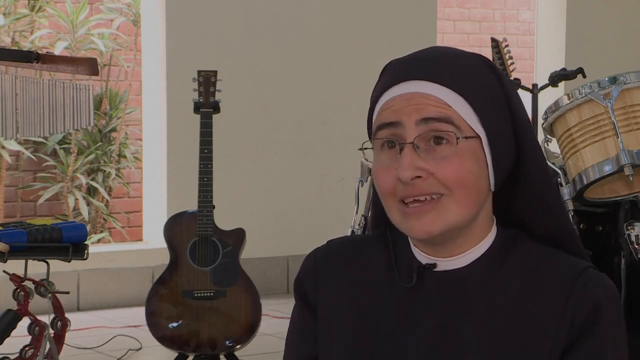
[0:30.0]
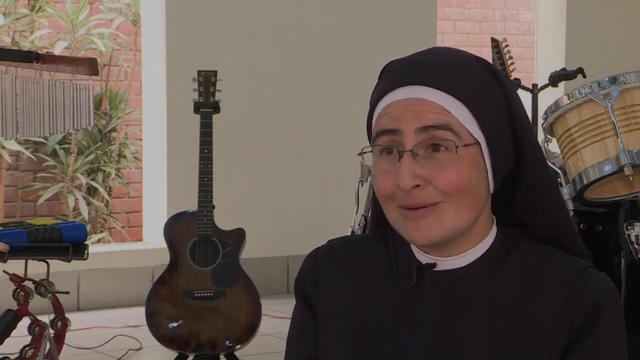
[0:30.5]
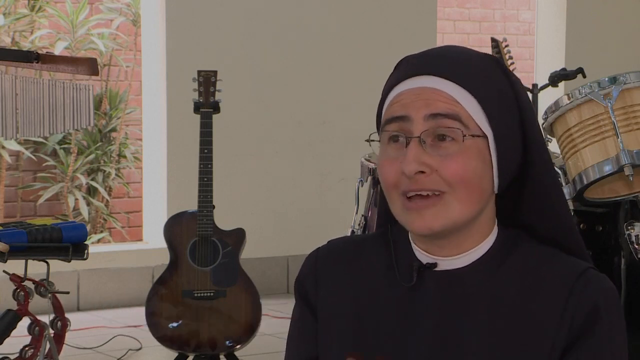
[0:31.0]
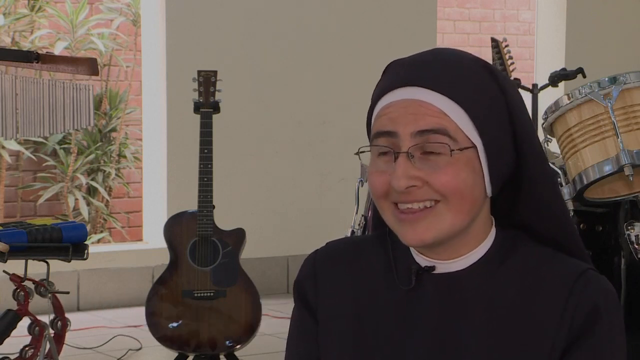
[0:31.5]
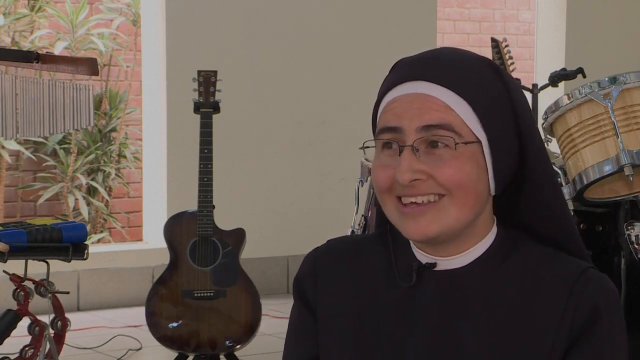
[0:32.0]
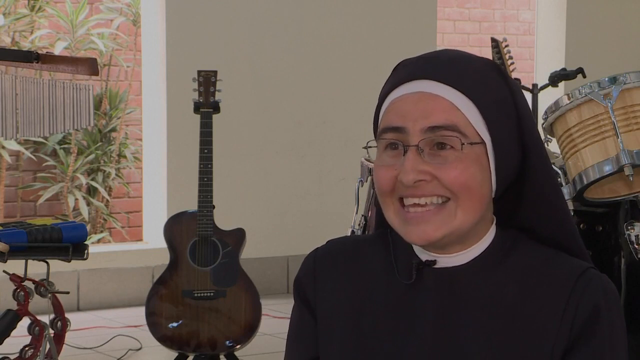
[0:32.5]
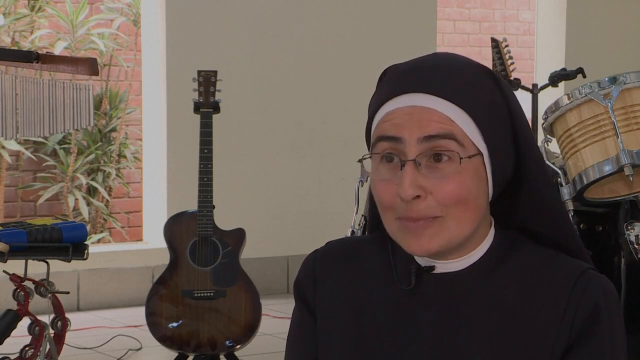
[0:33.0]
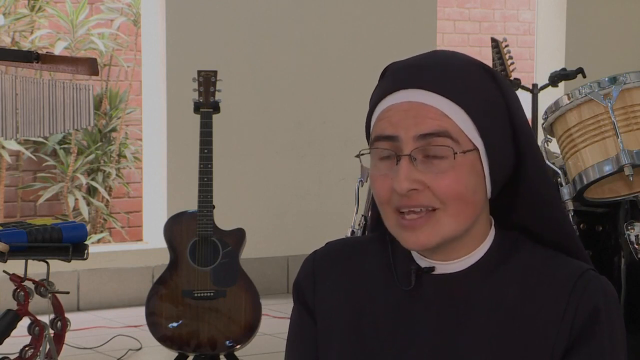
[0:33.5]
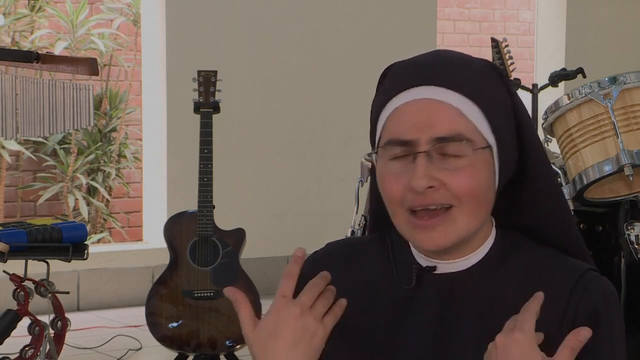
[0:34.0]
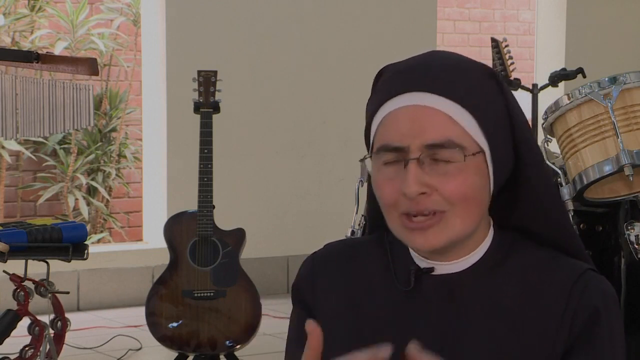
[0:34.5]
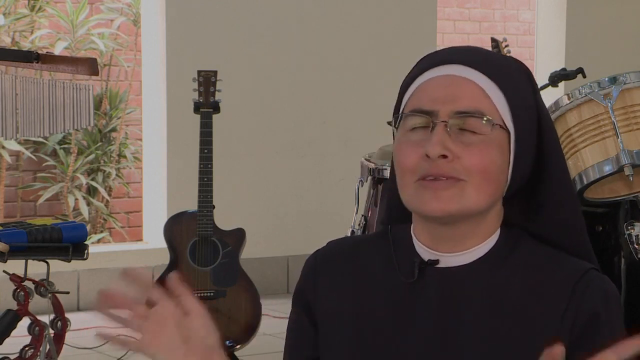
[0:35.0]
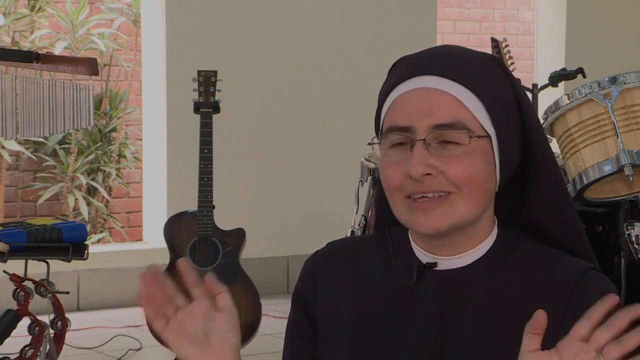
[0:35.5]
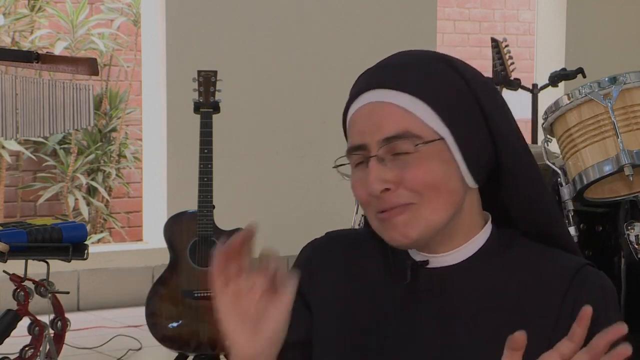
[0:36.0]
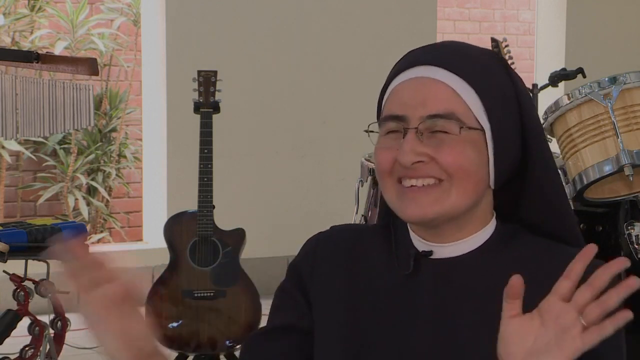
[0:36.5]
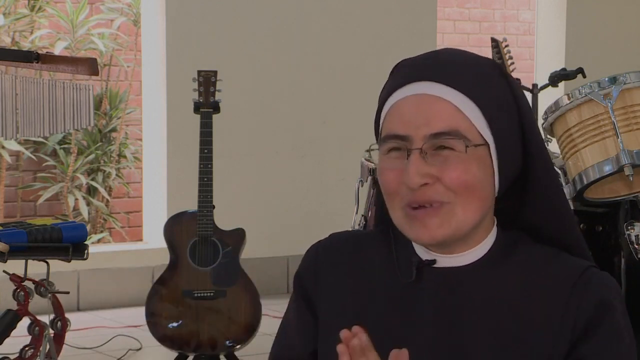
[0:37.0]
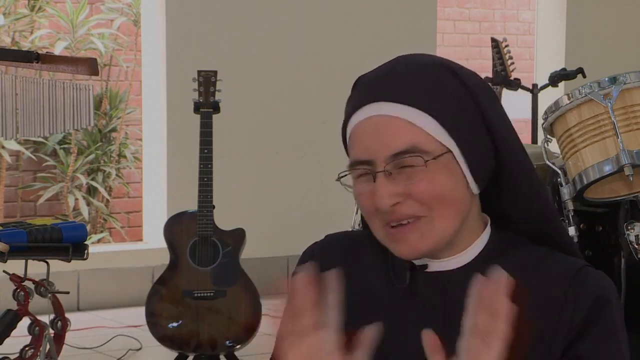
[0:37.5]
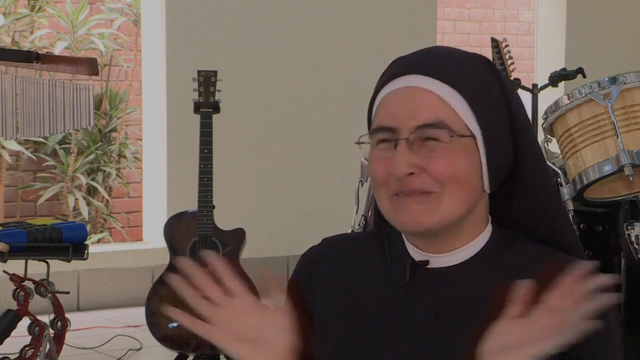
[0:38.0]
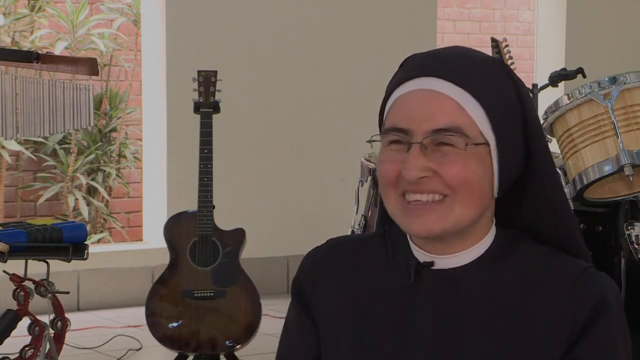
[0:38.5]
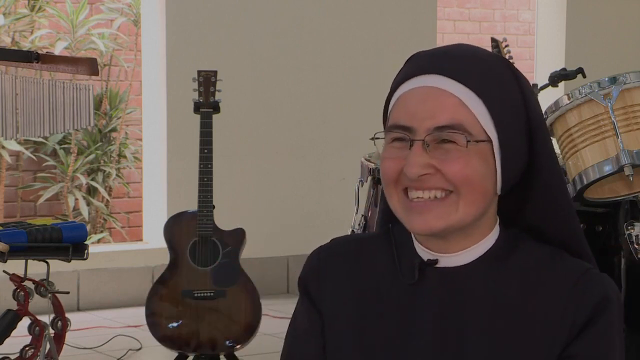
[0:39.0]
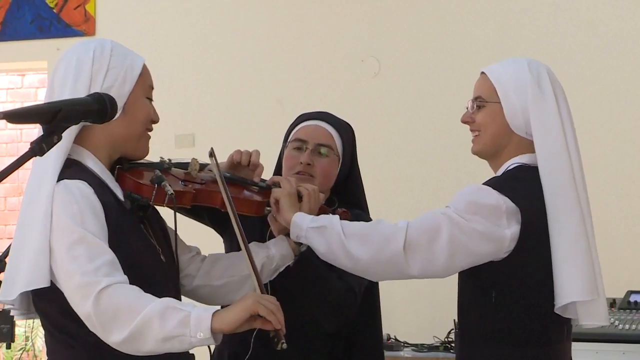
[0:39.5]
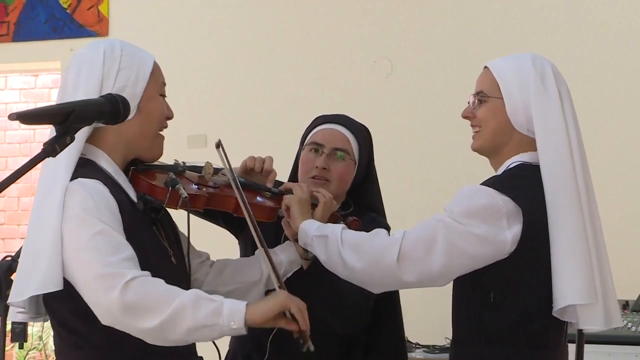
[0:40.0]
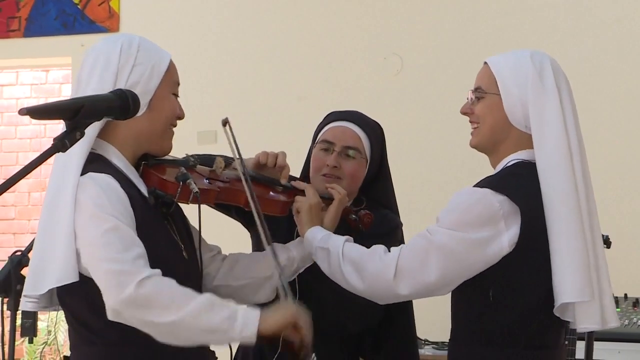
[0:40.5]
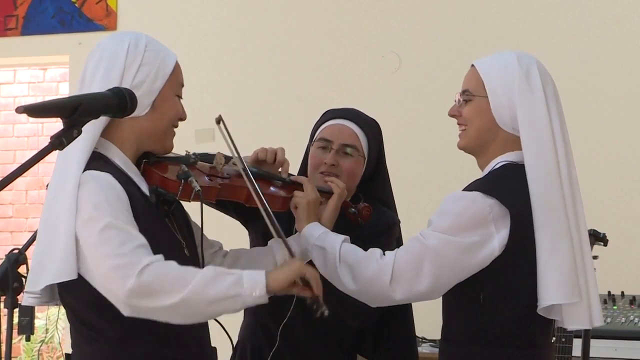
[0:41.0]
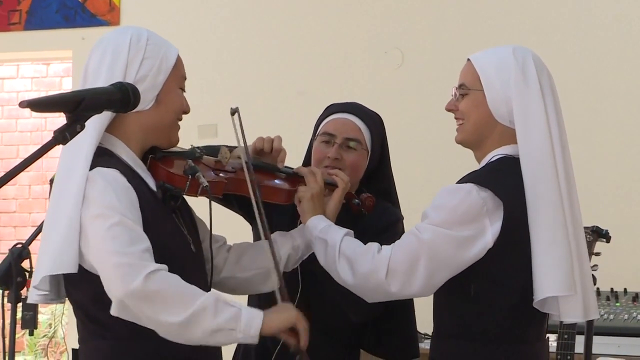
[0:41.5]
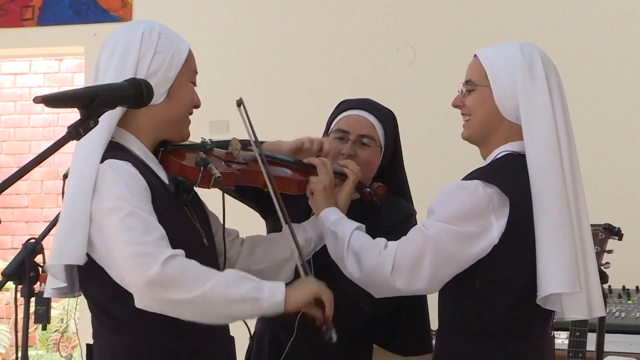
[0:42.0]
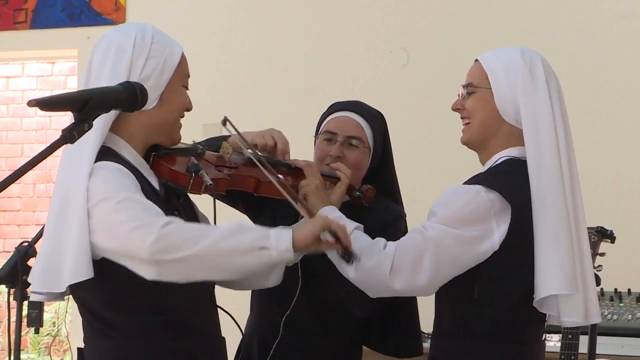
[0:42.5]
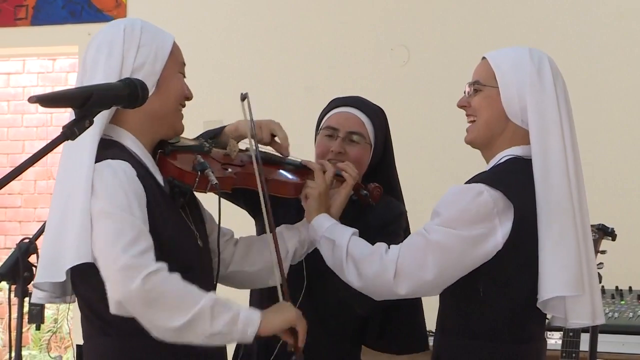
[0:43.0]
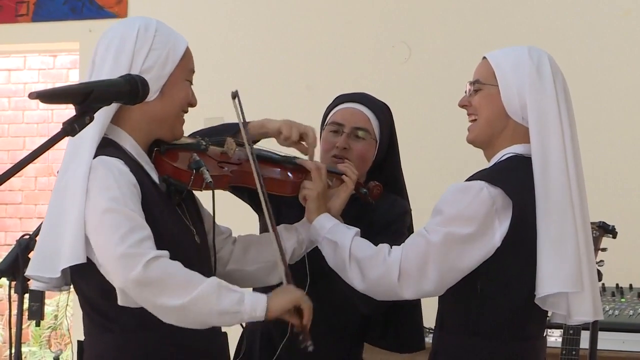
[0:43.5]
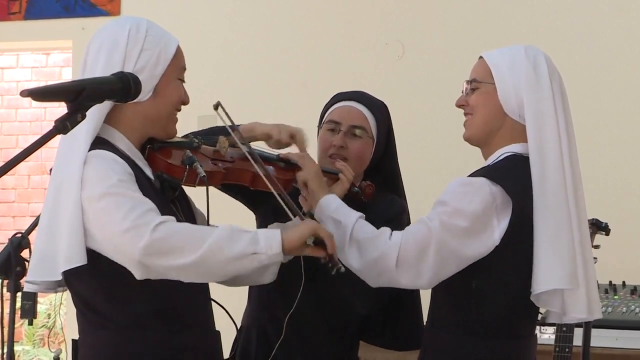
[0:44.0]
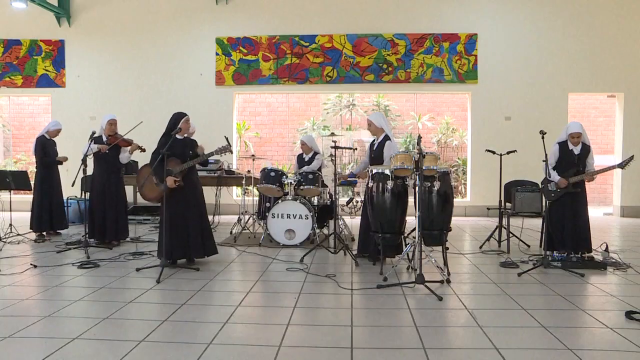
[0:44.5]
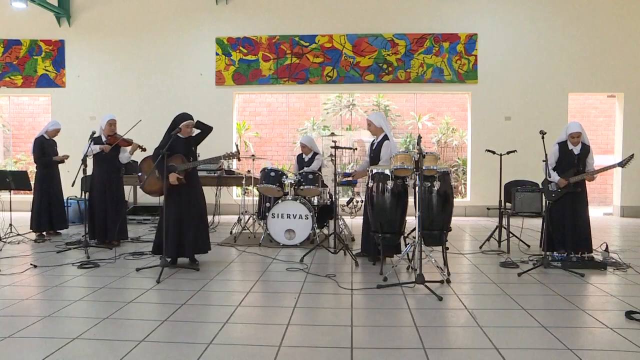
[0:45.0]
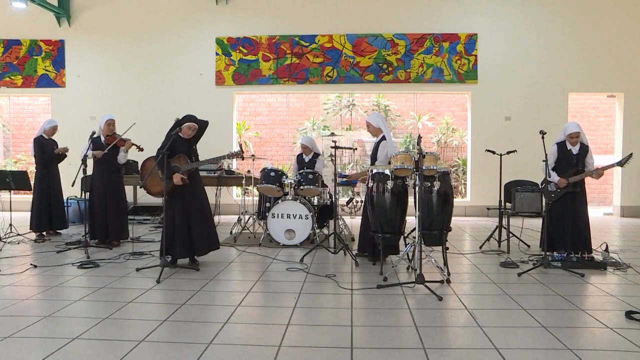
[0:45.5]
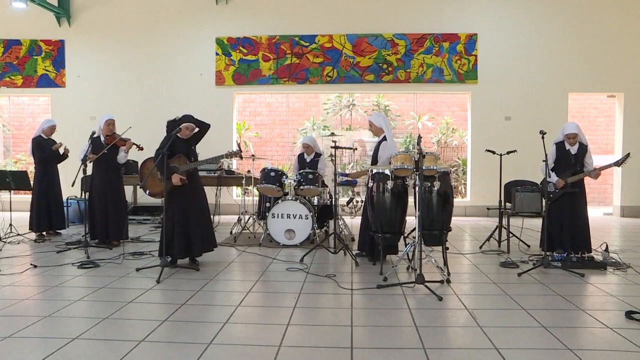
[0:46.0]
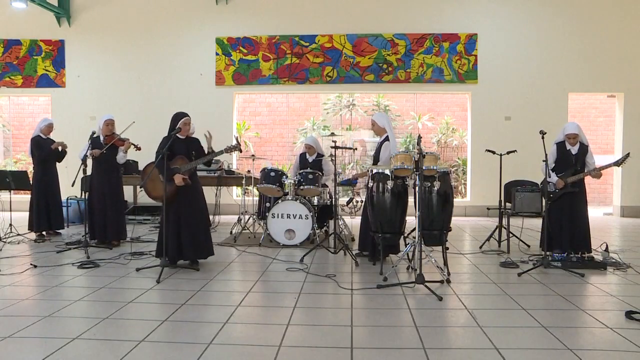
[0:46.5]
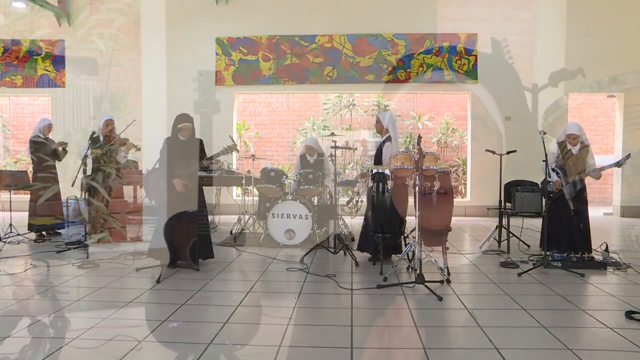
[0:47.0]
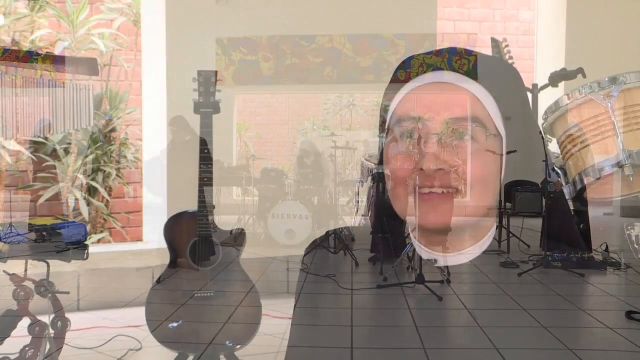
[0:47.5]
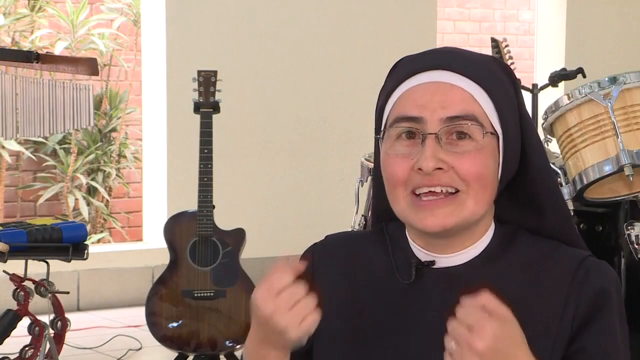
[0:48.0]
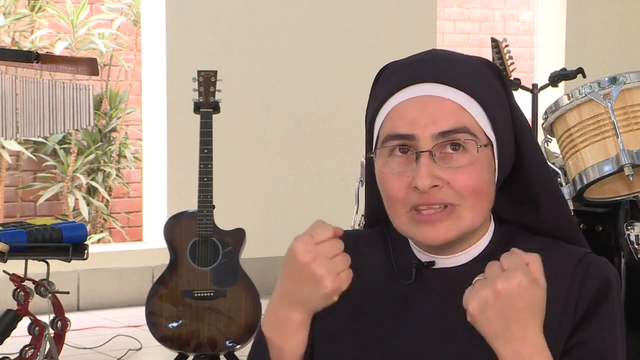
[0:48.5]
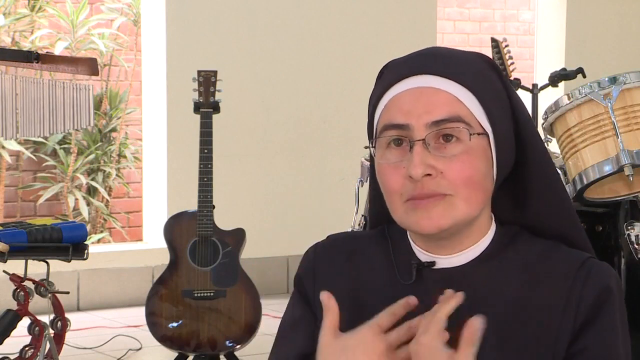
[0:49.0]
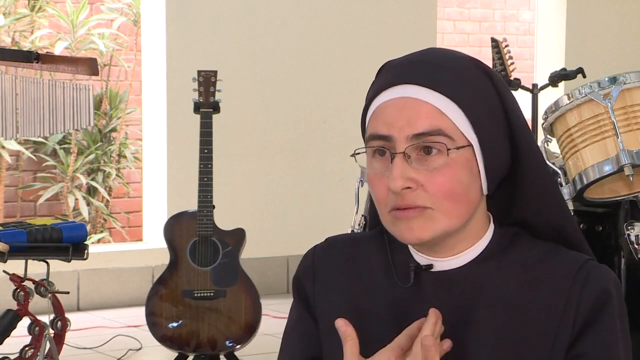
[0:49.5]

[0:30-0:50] A nun stands in a white room facing the viewer, with a drum set behind her on the right and a guitar leaning against a white wall behind her on the left. Facing to the left, she wears glasses and smiles as she speaks to the viewer. She nods and looks to the left as she speaks, raising her arms to shoulder height and closing her eyes. She raises and waves her hands as she smiles, emphasizing her speech. Three nuns practice with a violin: the nun on the left plays it, holding it against her chin with the bow in her right hand, while the two nuns to her right hold the violin and touch different strings on its neck as she plays. Six of the nuns are on stage. From left to right: a nun looking down to the right, a nun with a violin under her chin, a nun facing right with a guitar under her right arm, a nun facing left sitting in front of a drum set, a nun facing left standing up, and, furthest right, a nun looking down strumming a guitar held in both hands. A close-up shows the nun with glasses facing left, and then a nun plays a tambourine.